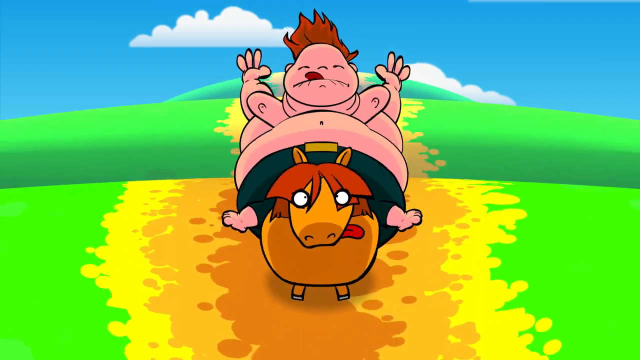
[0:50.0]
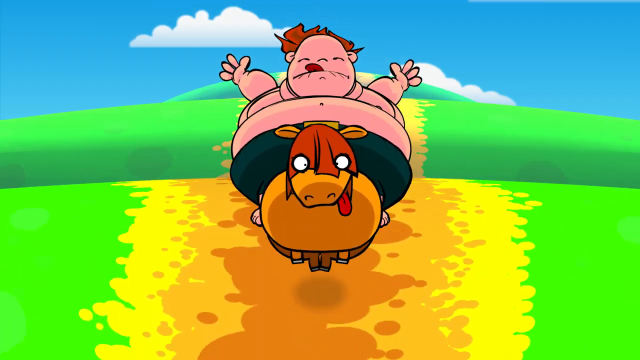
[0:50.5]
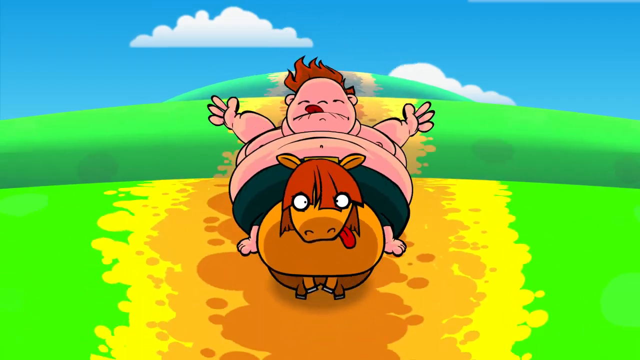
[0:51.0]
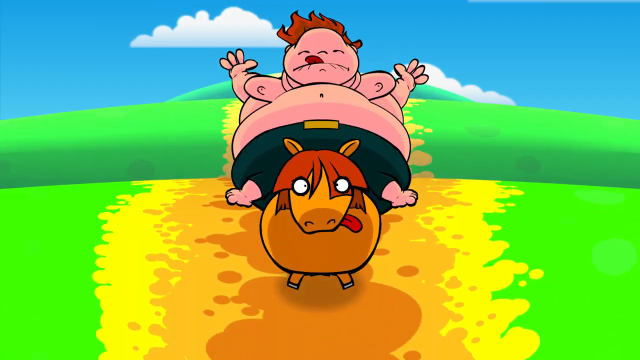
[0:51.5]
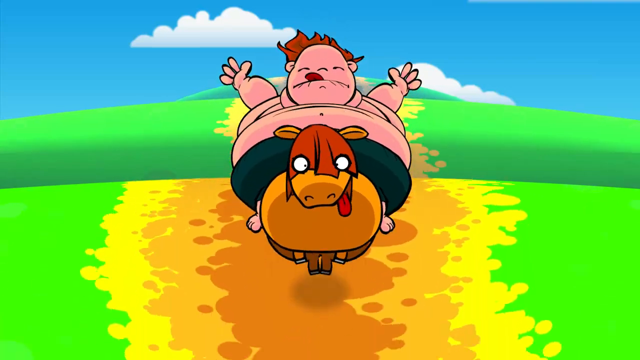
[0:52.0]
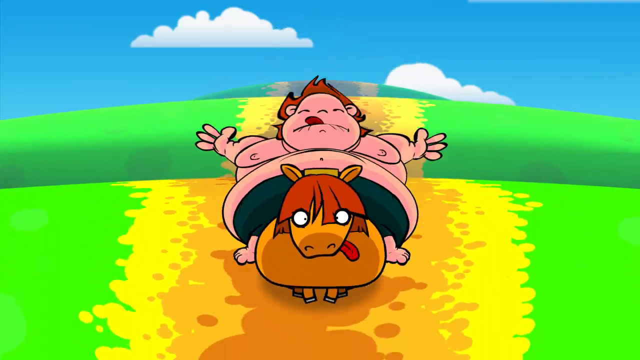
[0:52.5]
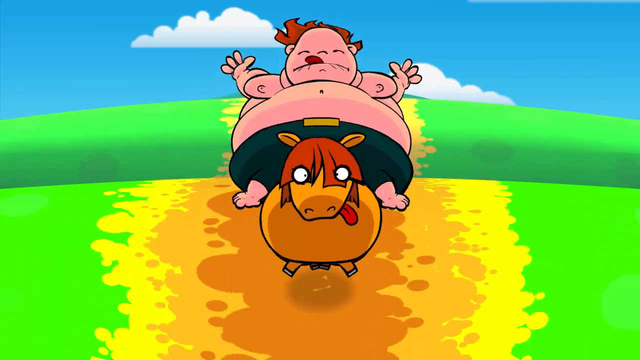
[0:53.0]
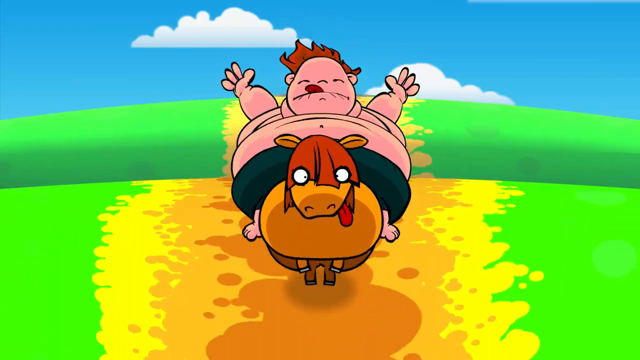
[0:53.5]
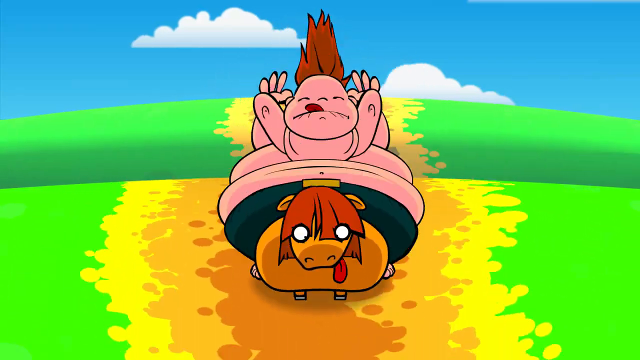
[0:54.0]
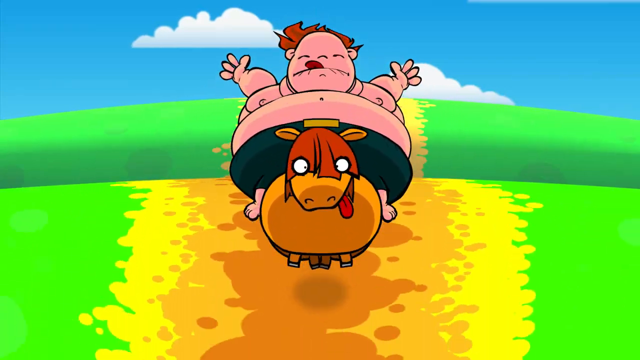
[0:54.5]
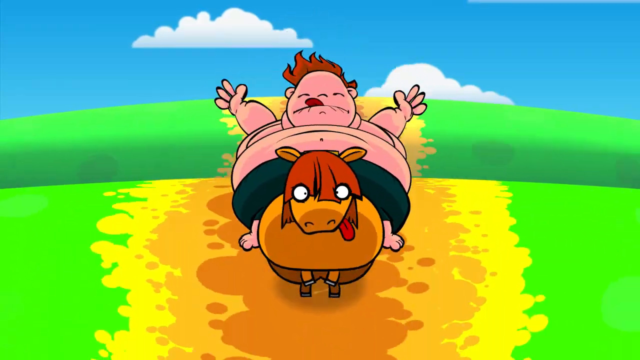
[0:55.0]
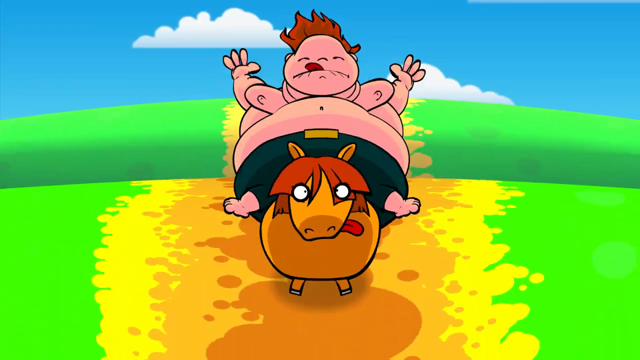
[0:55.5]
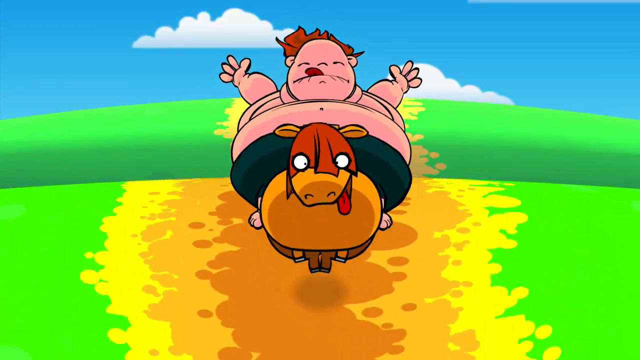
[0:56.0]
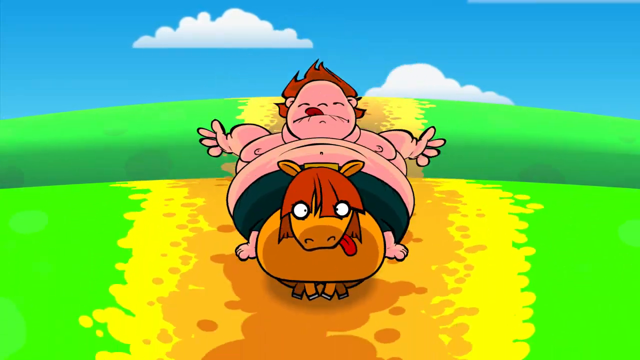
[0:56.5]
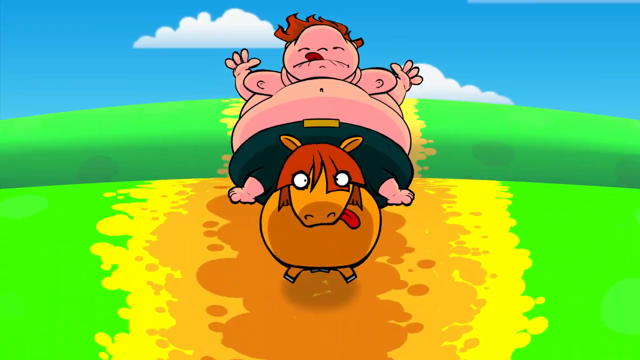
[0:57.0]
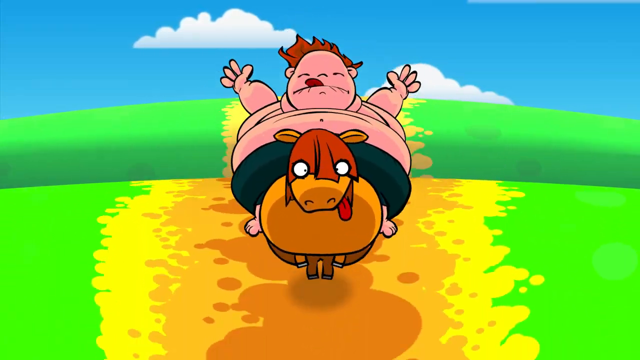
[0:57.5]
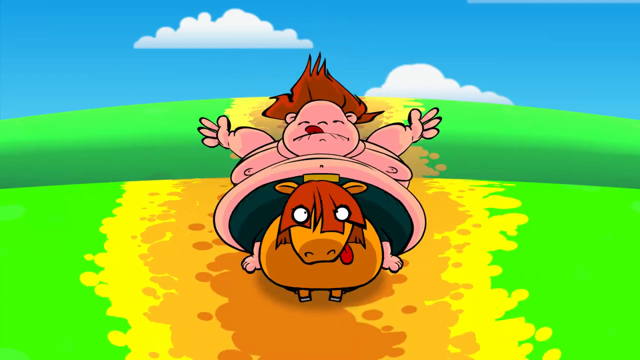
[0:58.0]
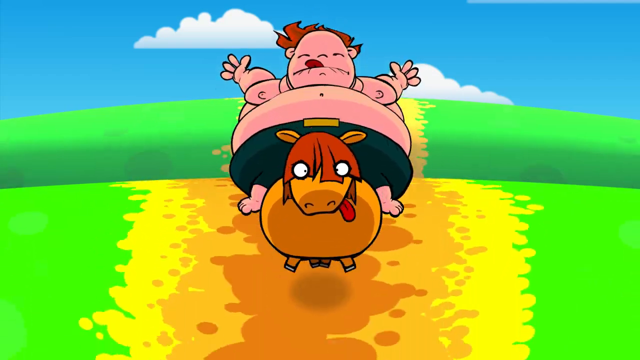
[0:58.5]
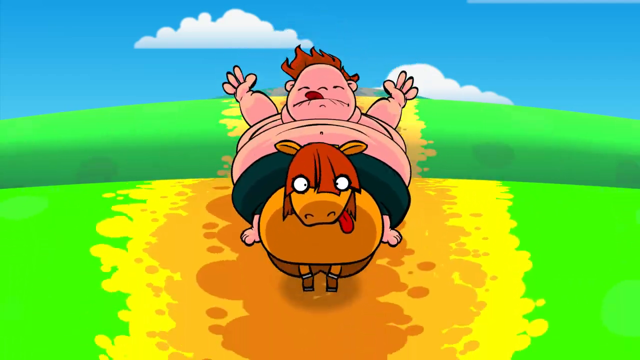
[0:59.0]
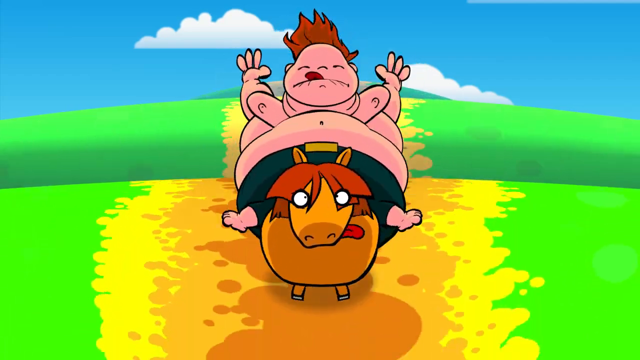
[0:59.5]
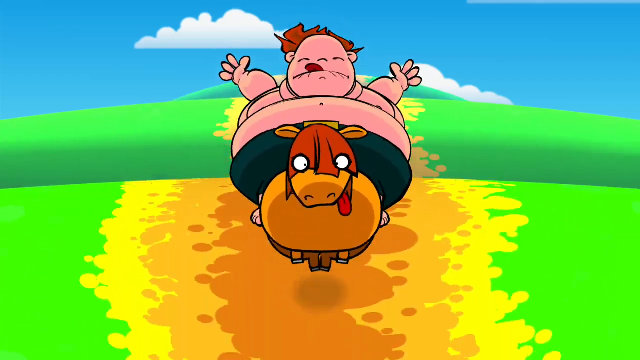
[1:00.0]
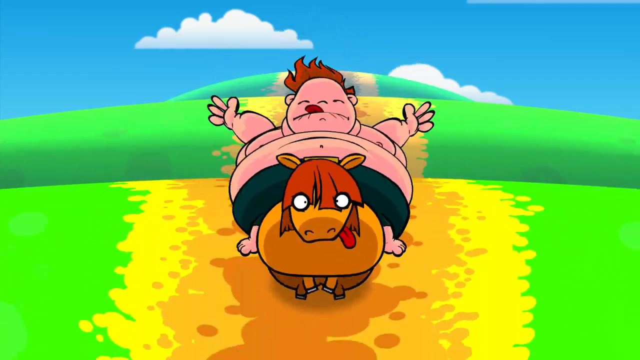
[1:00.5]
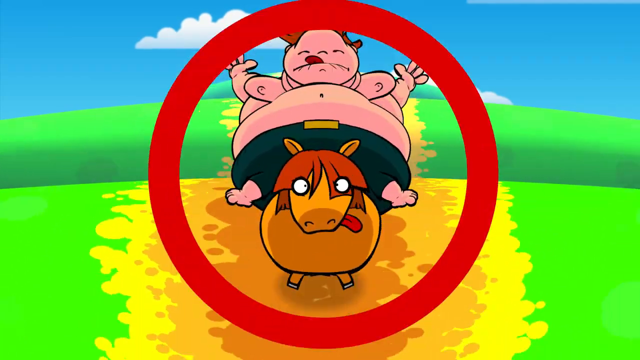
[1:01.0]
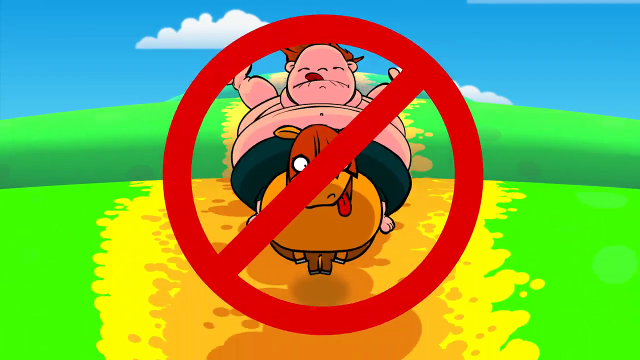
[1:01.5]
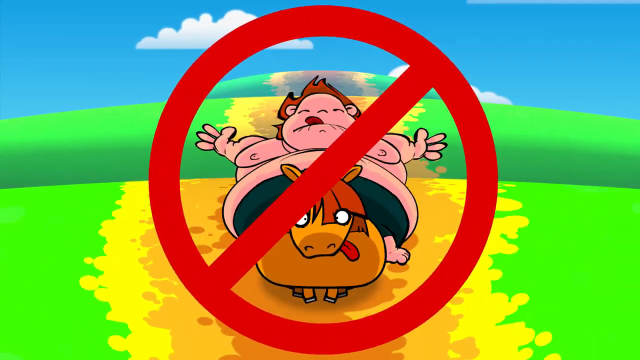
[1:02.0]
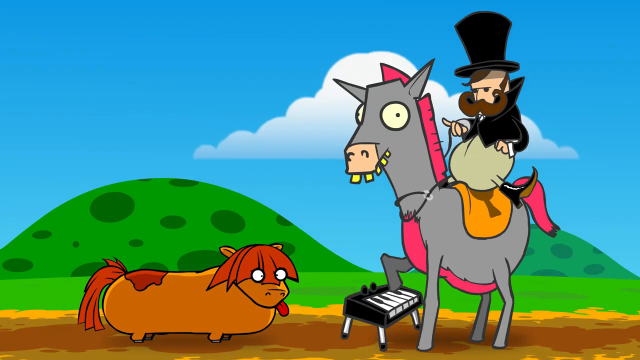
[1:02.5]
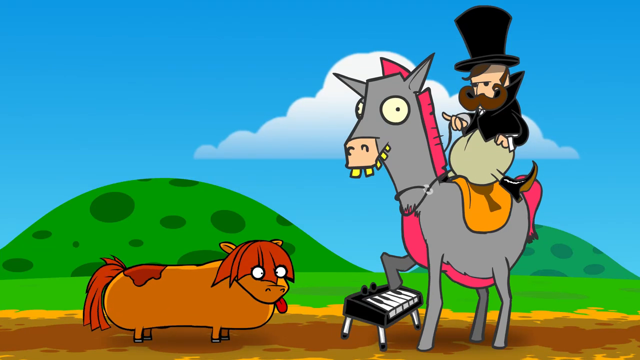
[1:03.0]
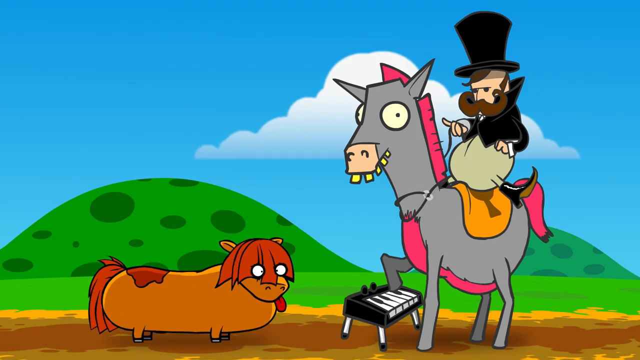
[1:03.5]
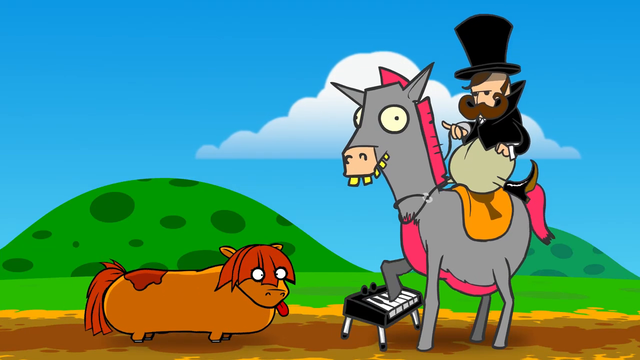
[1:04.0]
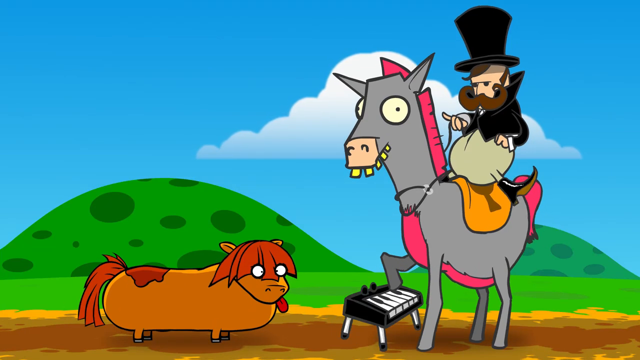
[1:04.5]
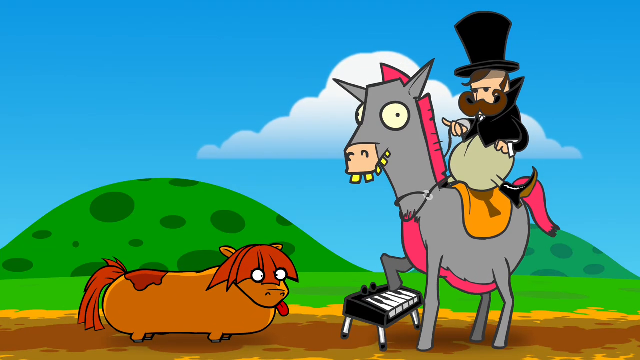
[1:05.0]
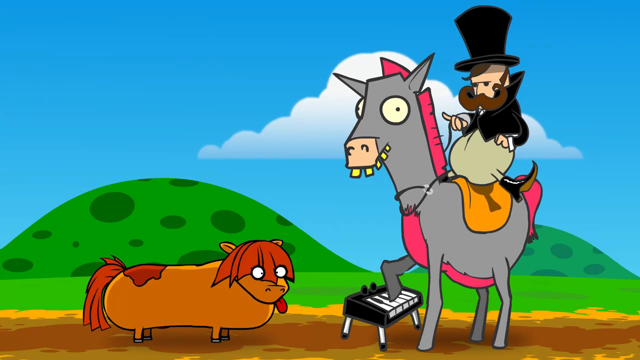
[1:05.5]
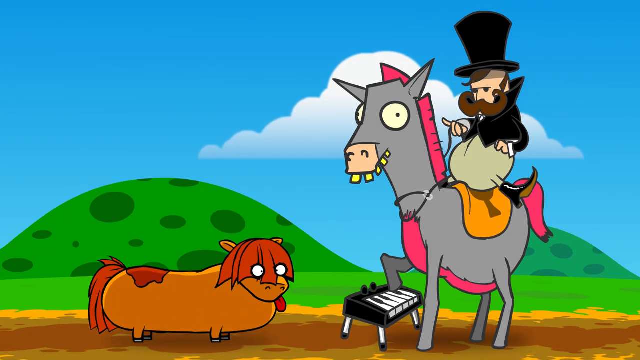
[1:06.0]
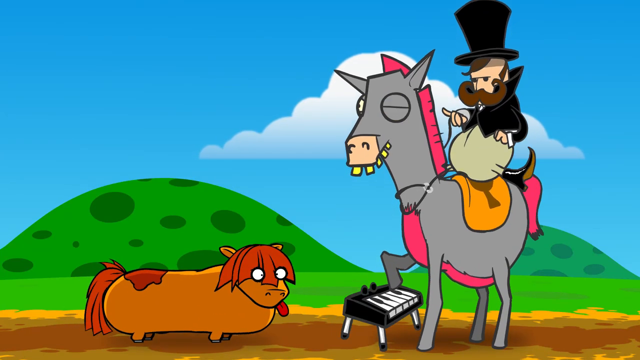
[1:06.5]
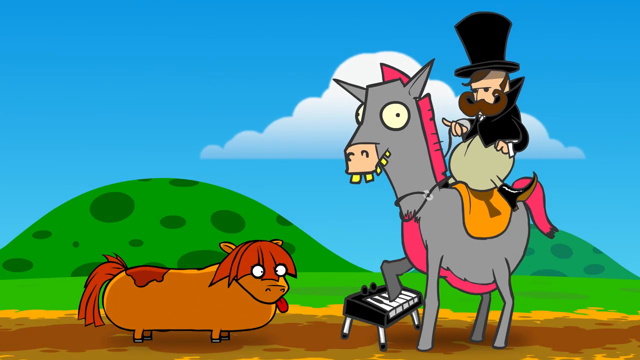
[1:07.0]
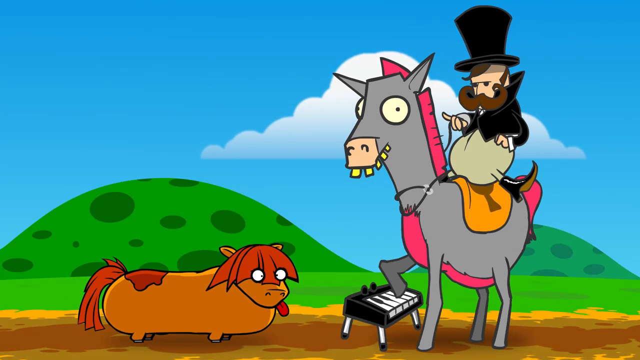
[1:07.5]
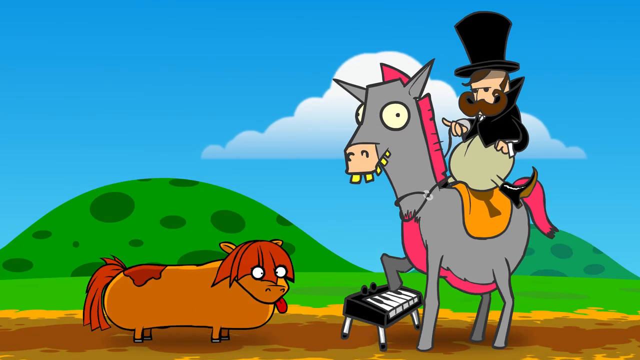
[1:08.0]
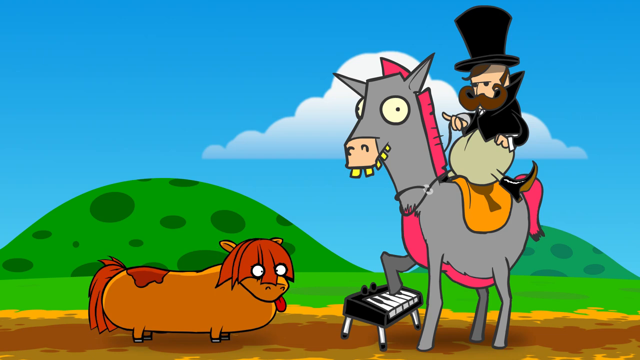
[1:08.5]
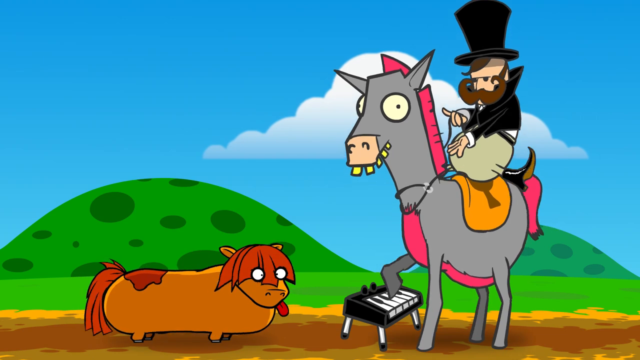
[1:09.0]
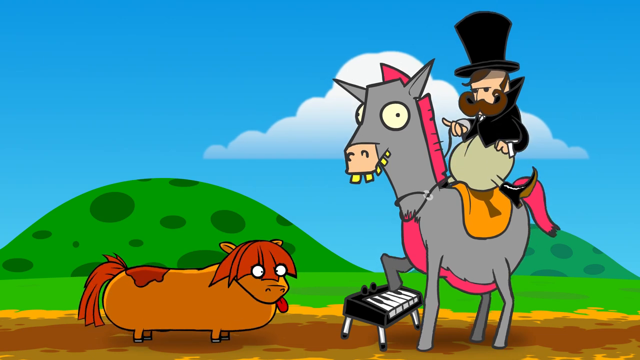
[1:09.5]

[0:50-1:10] The overweight kid rides the cow on the same mountain as earlier; the scene appears to loop, since the background does not change. Next comes the no riding sign, and the scene switches to the horse, the cow and the person riding the horse. The horse, facing left, plays a black piano keyboard with four legs and black and white keys, using its raised front right leg, and the others appear to be listening to the music it plays. Then the background changes to rainbow colours rotating around the image, and the three characters bounce up and down as if dancing to music.